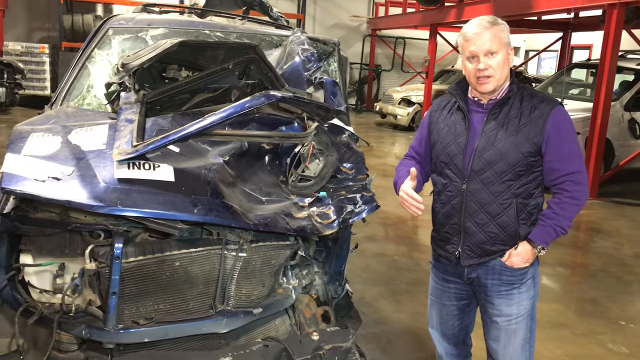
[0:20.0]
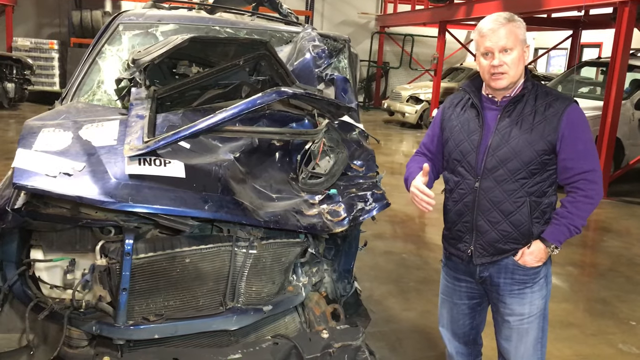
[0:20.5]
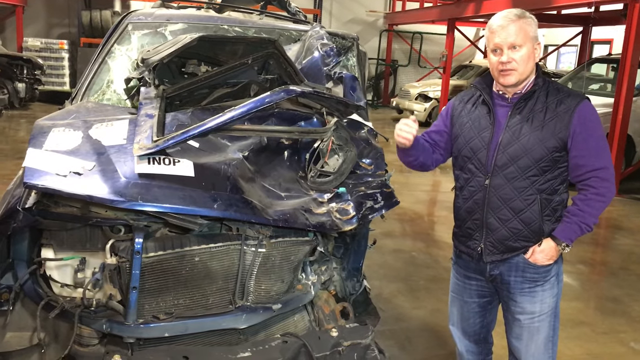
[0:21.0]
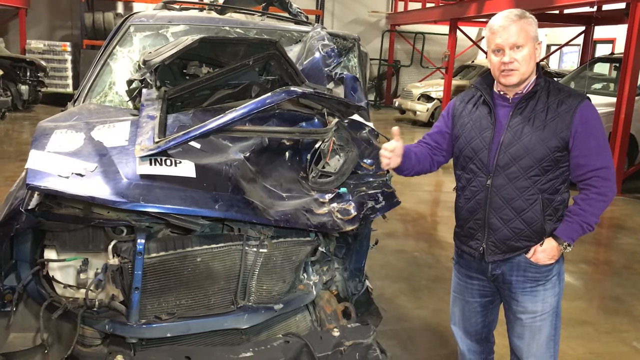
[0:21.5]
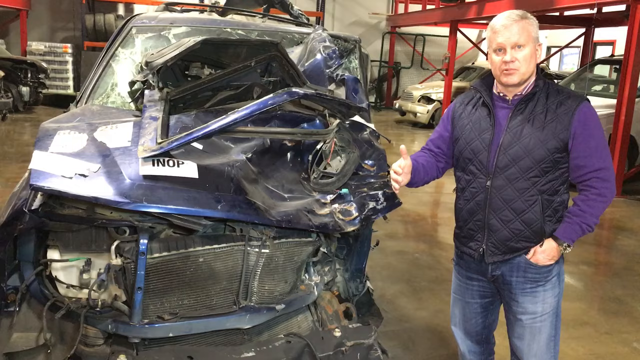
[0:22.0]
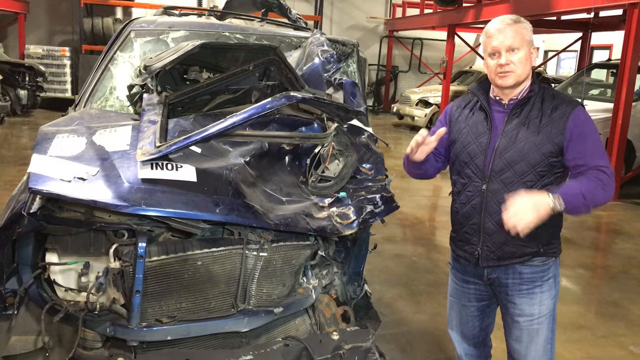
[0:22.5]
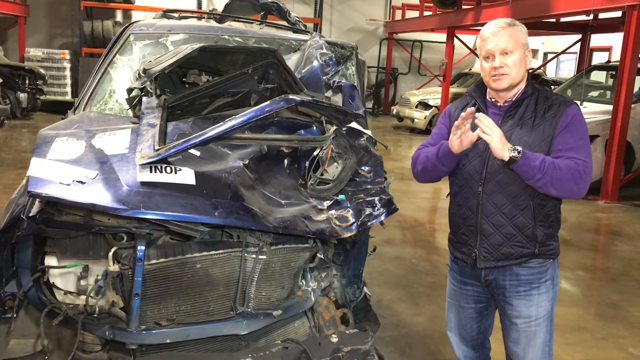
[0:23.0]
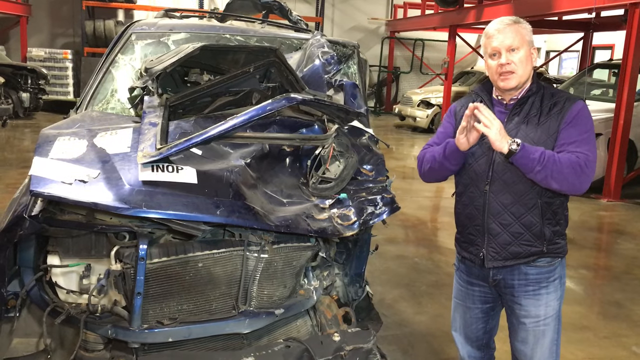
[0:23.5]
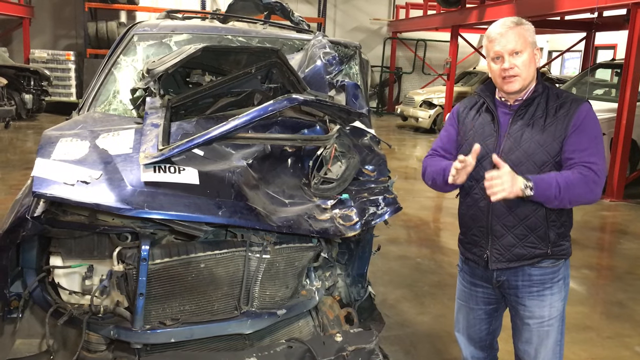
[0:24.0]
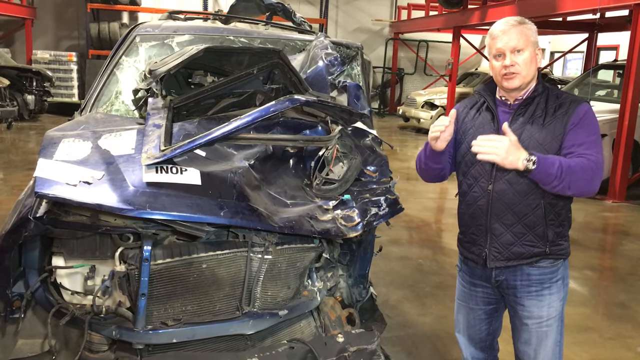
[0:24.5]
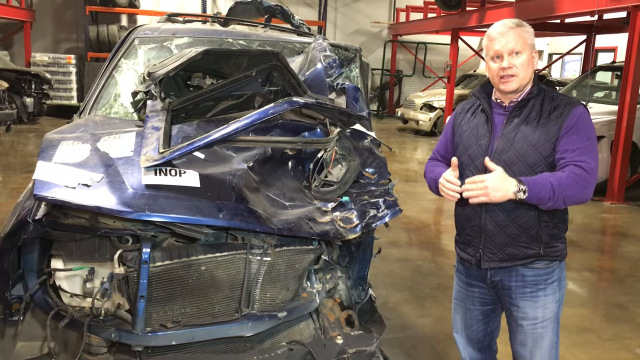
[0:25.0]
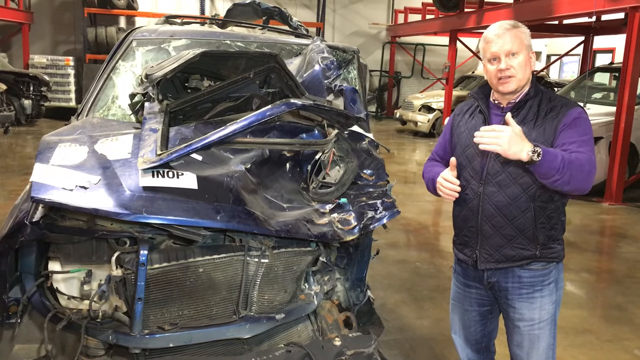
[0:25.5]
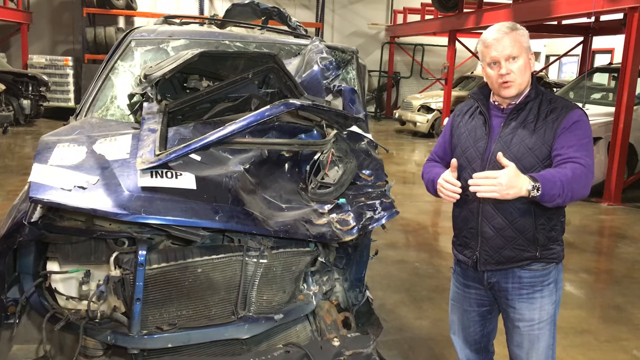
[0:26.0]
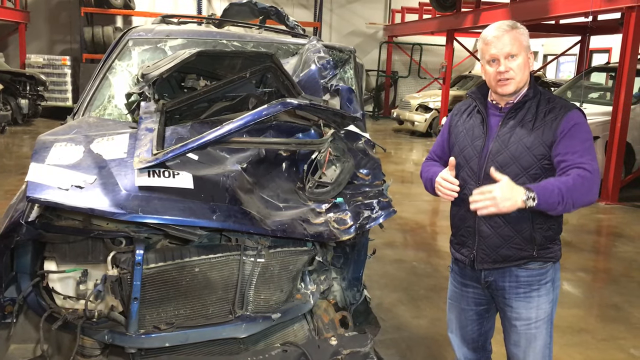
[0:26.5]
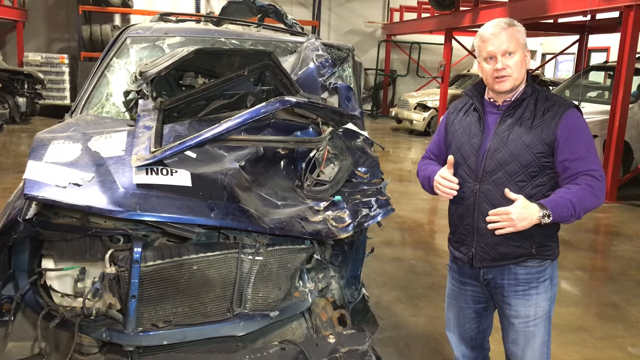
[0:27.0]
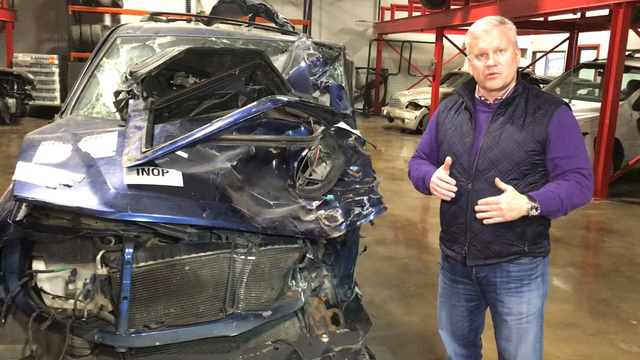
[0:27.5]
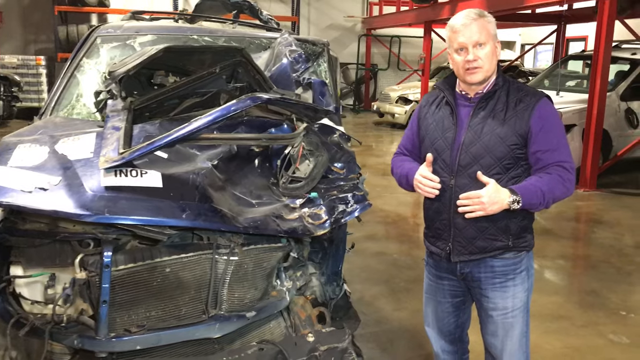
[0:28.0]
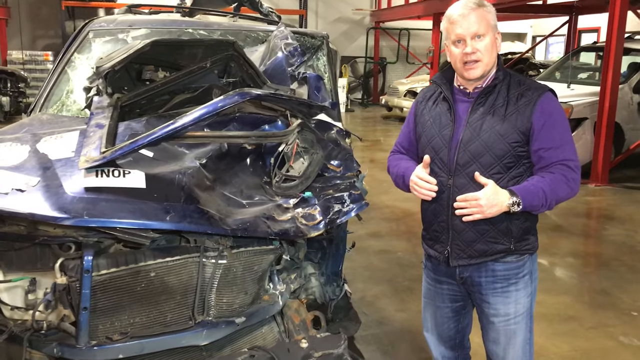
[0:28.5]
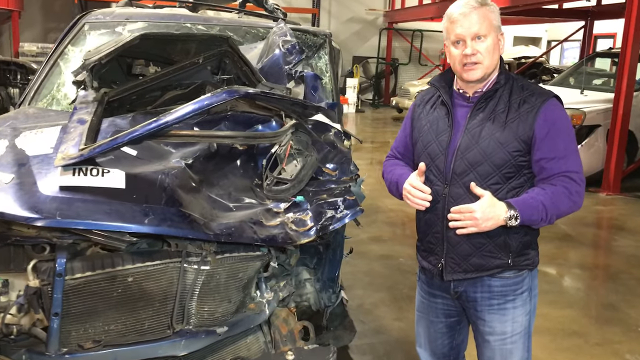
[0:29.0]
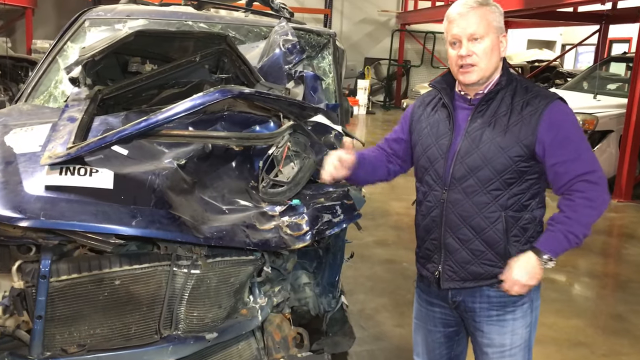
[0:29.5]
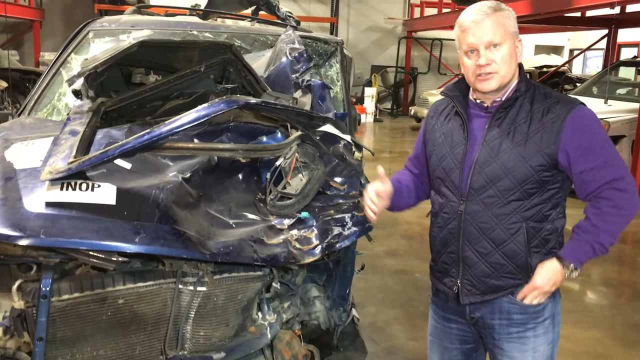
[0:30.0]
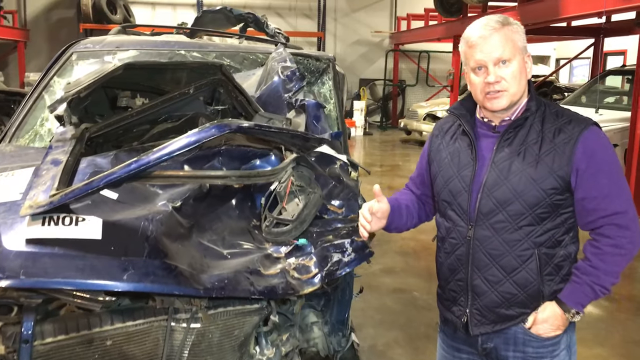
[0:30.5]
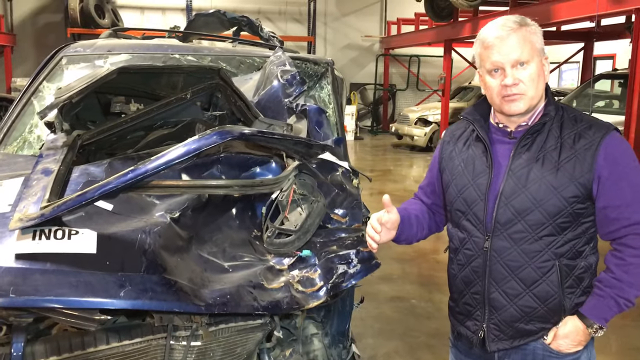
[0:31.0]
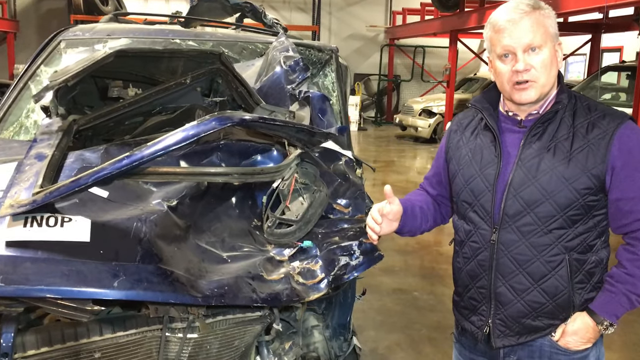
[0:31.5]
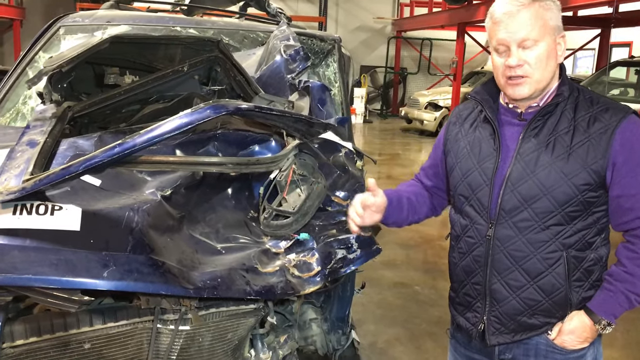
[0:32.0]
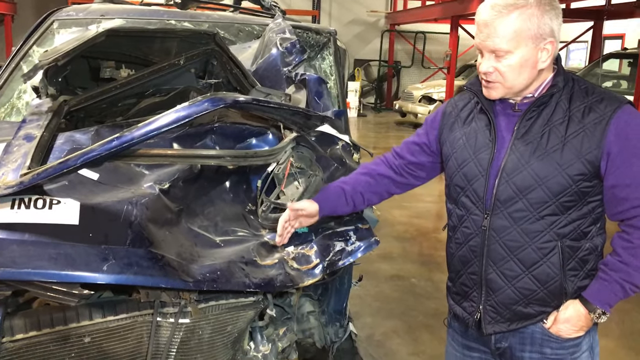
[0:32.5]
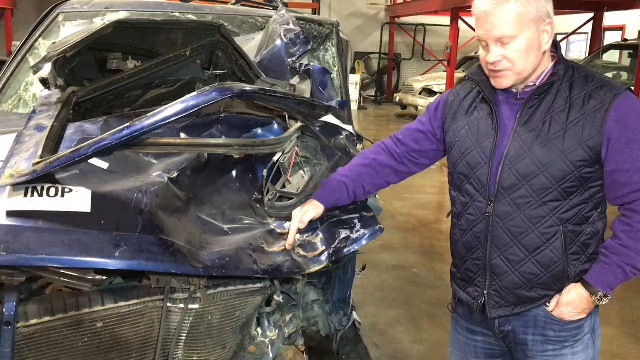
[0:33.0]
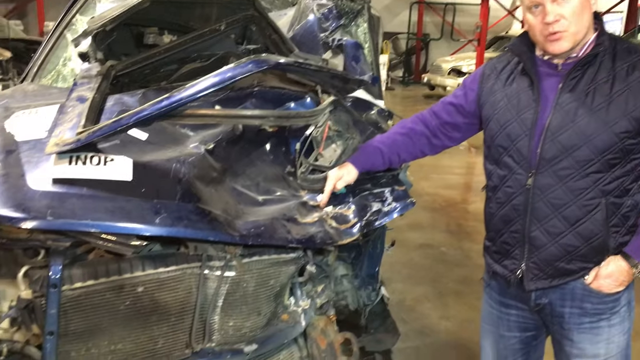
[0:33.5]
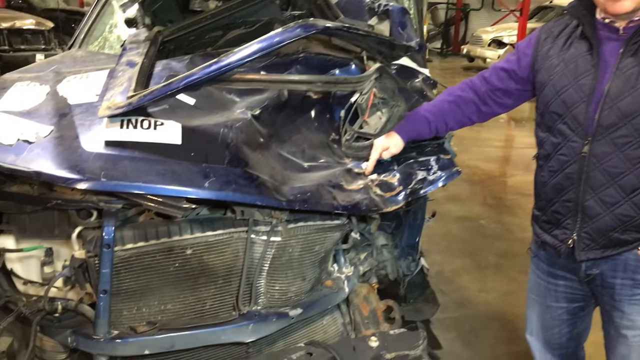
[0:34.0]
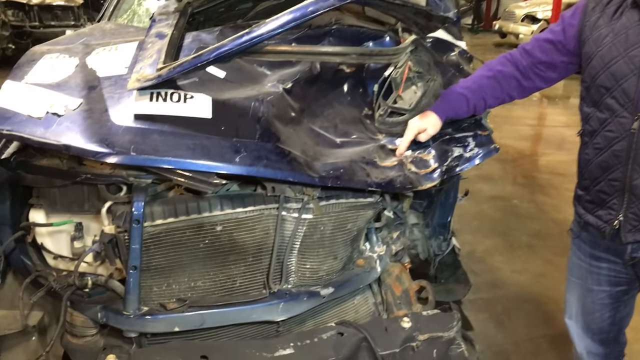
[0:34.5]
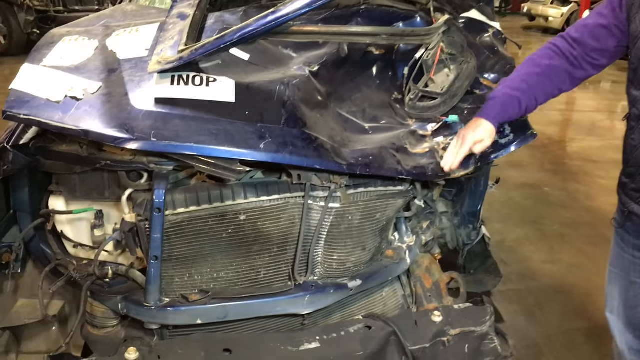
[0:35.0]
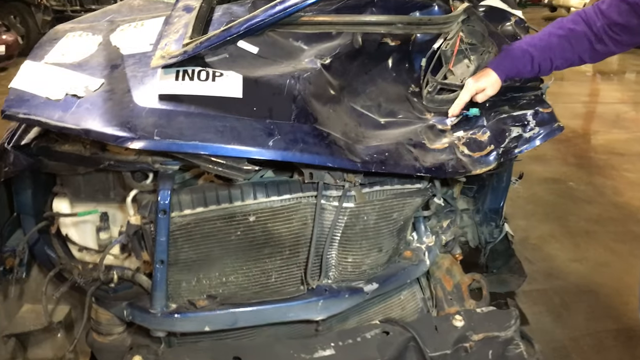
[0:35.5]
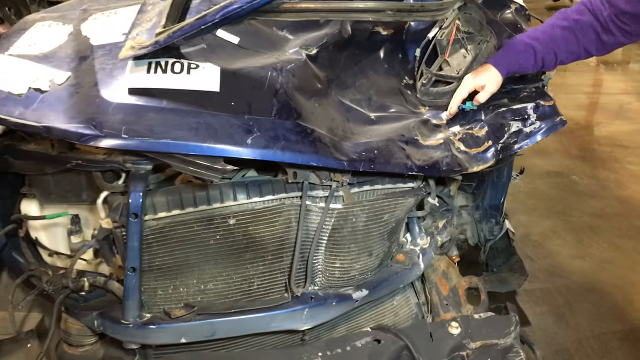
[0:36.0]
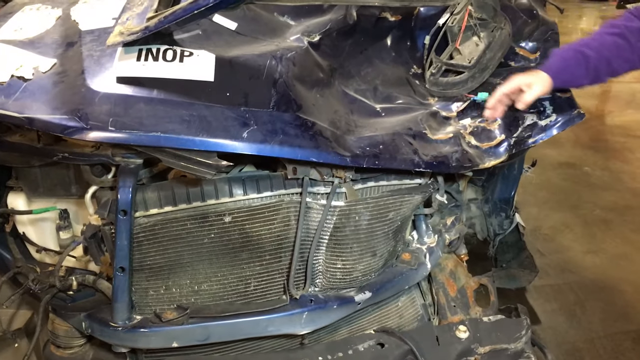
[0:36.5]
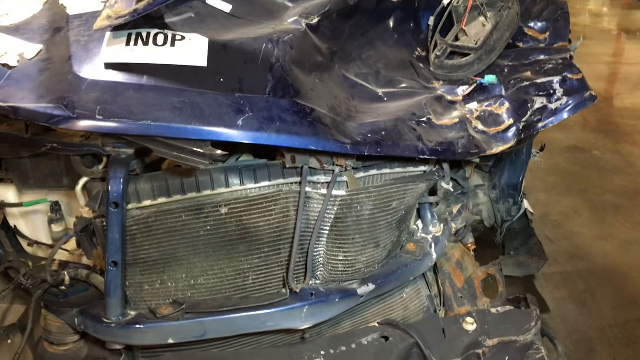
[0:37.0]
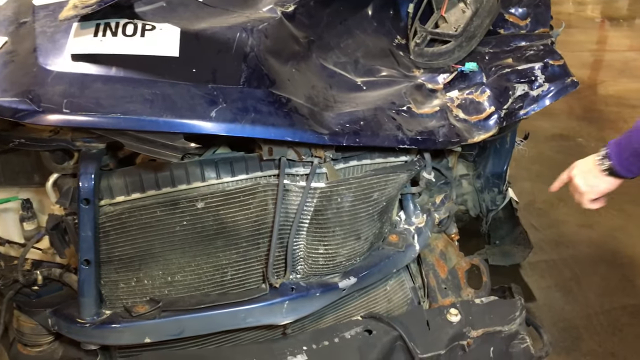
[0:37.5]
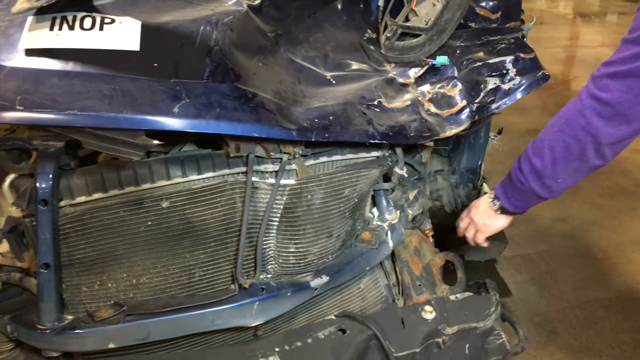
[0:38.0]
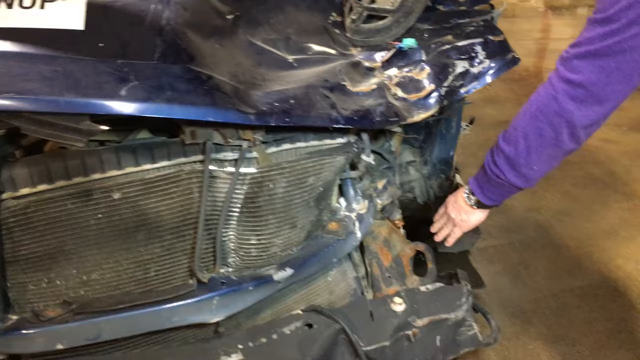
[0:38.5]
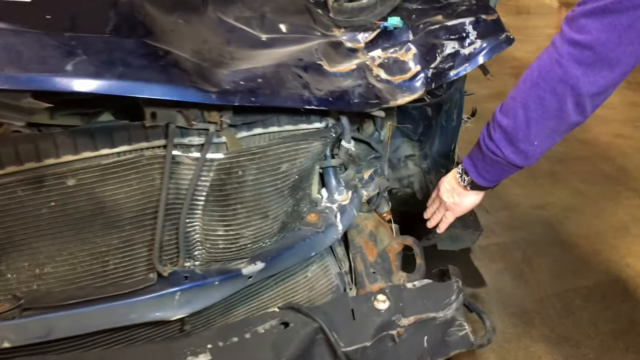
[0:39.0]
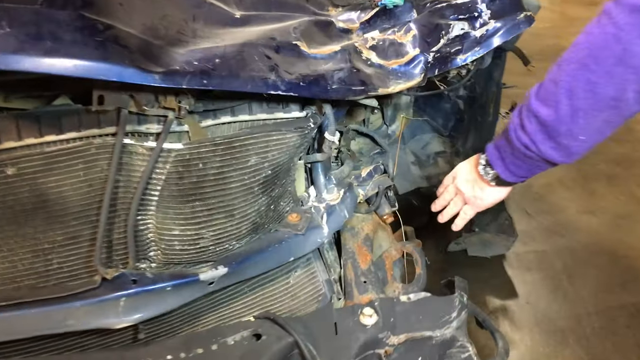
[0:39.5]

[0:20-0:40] The same man continues to look toward the camera, making a lot of arm gestures as he speaks. He points at the front of the vehicle with his right hand, apparently describing some process with what looks like a step-by-step gesture, and alternately puts his left hand back in his jeans pocket. He points toward various damaged parts of the vehicle. He looks down toward the bottom of the vehicle on the driver's side, where a wheel and tire would typically be, but there is nothing there. The camera lowers a bit, showing the grill and the inside of the wheel well. The vehicle is damaged beyond recognition; it looks as if it might be a passenger-size SUV, but the extent of the damage makes it hard to tell.